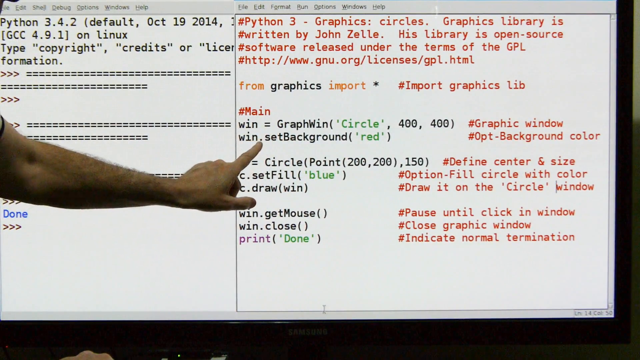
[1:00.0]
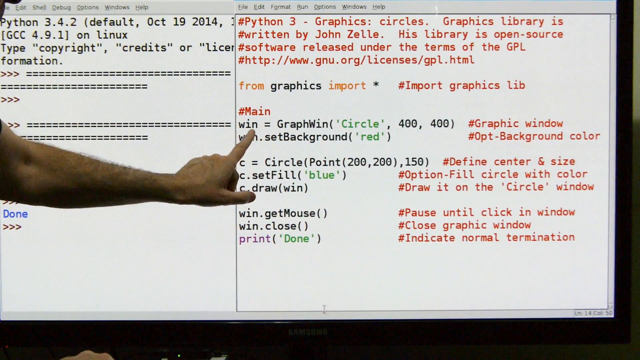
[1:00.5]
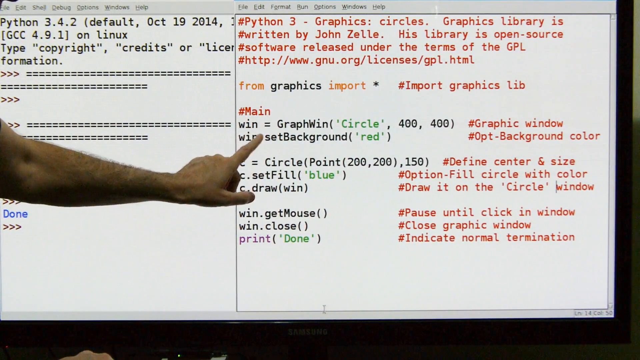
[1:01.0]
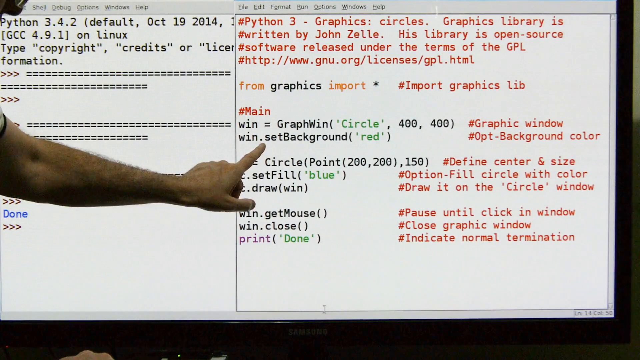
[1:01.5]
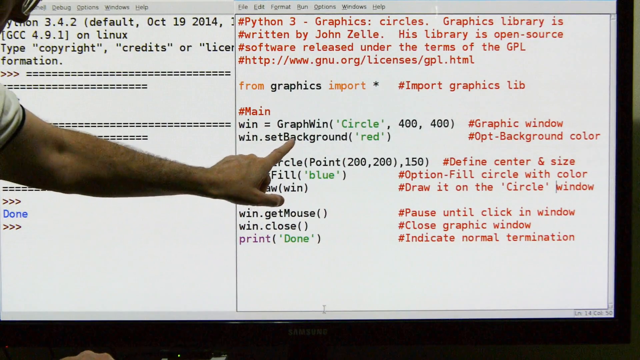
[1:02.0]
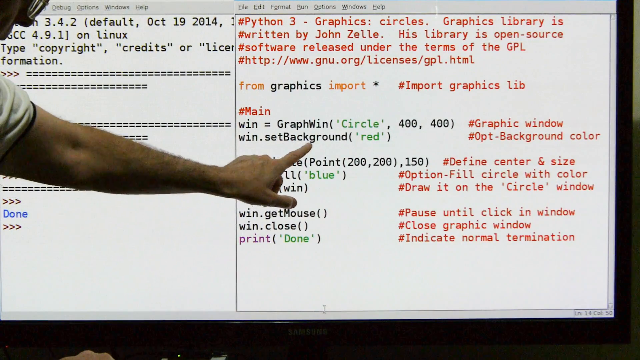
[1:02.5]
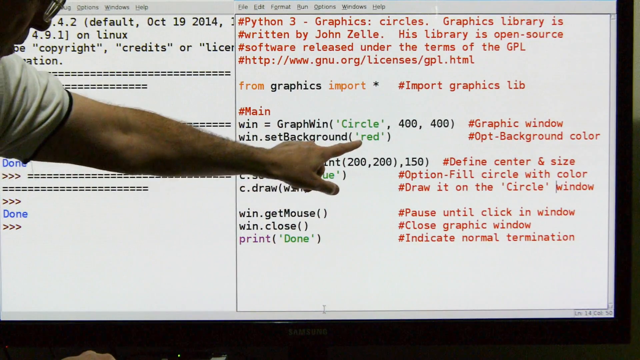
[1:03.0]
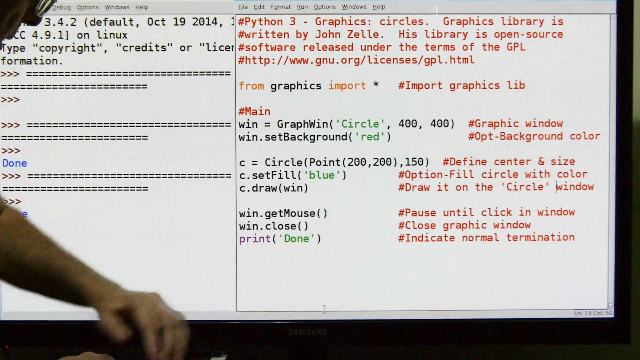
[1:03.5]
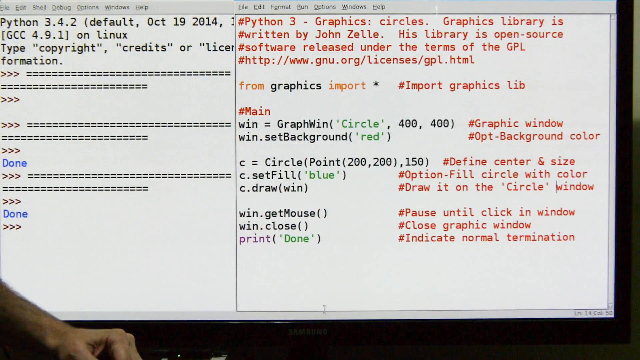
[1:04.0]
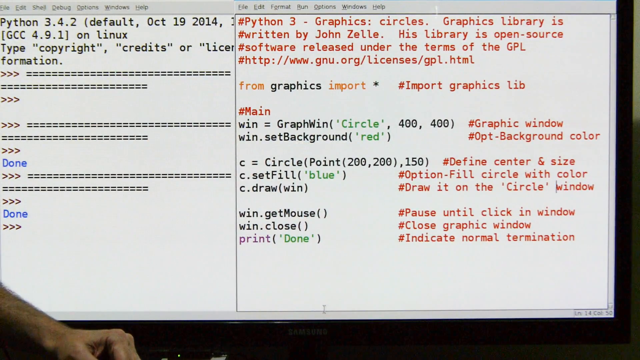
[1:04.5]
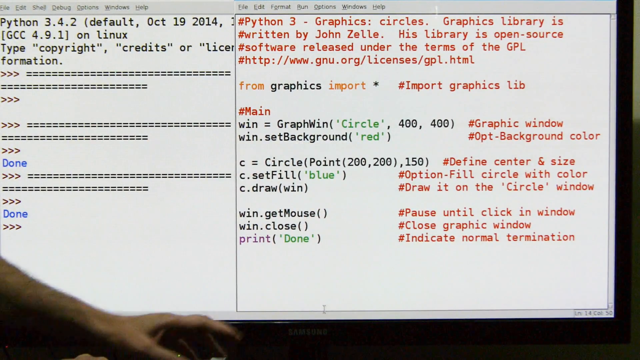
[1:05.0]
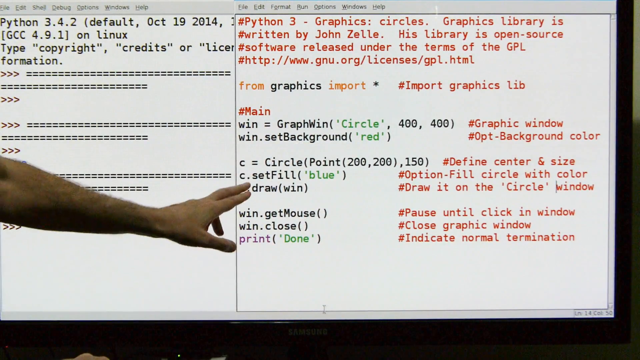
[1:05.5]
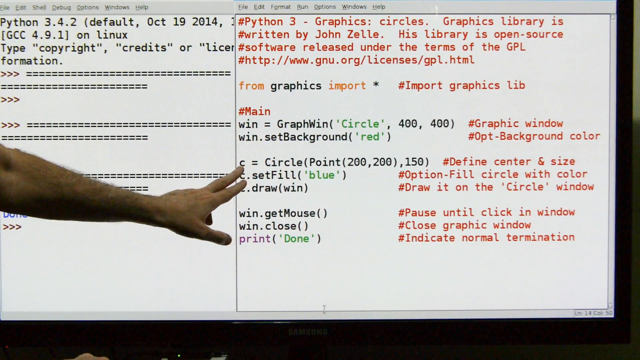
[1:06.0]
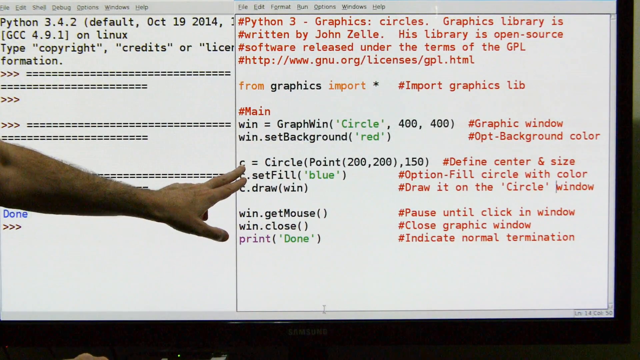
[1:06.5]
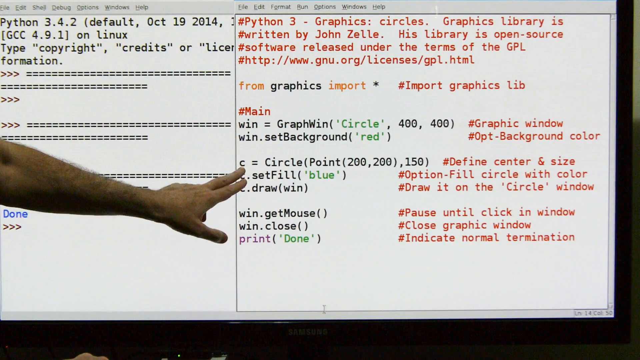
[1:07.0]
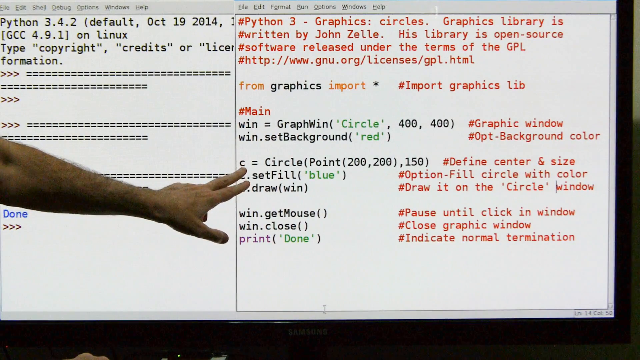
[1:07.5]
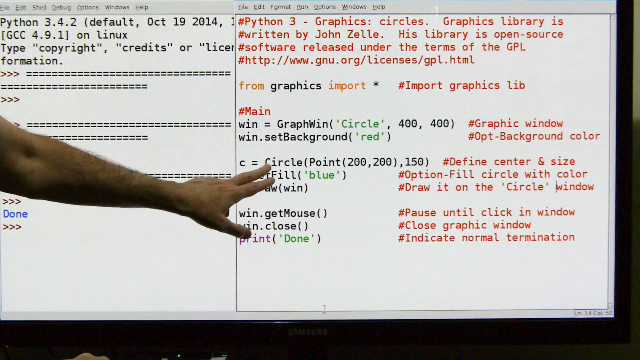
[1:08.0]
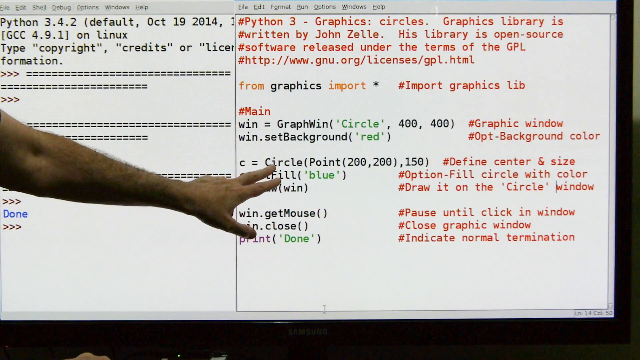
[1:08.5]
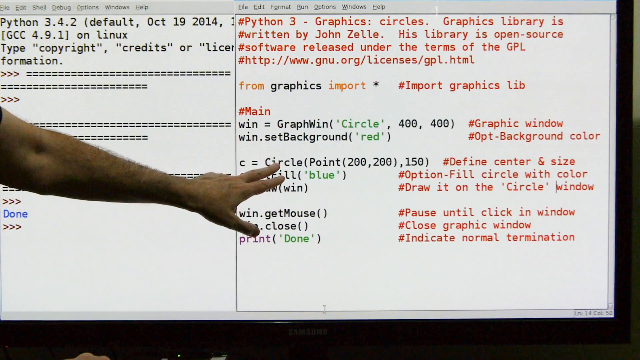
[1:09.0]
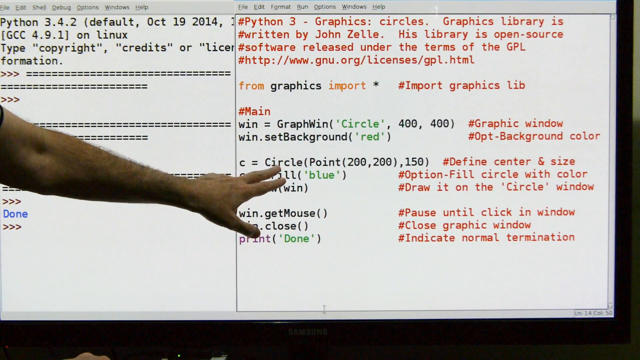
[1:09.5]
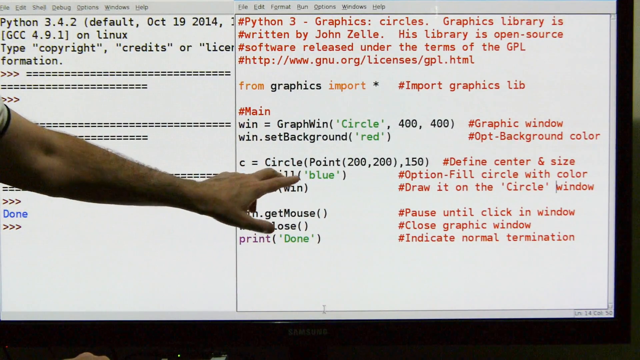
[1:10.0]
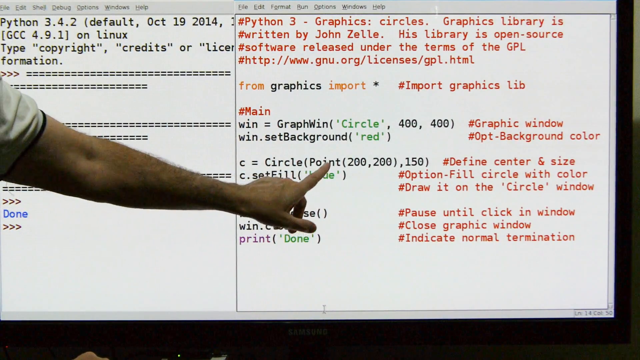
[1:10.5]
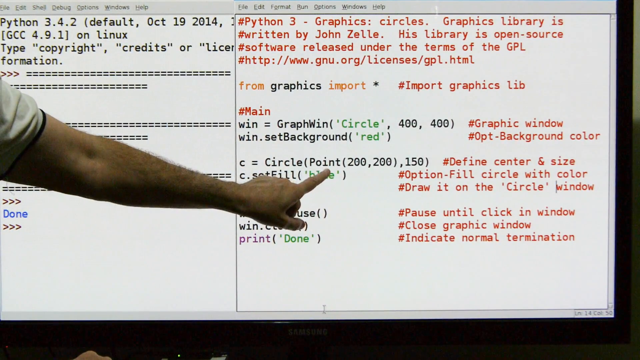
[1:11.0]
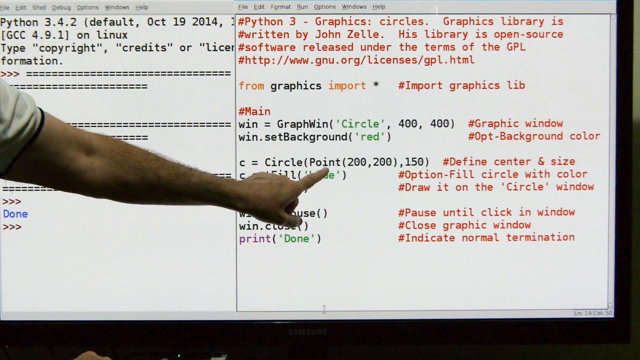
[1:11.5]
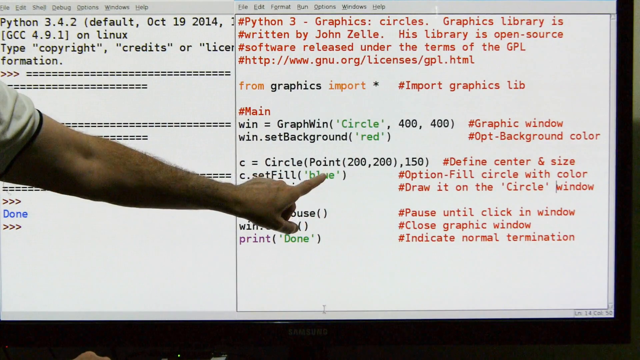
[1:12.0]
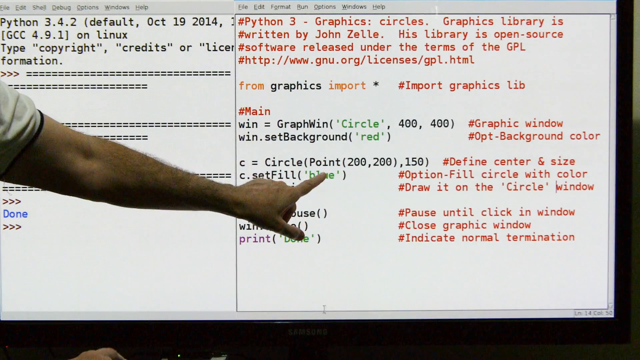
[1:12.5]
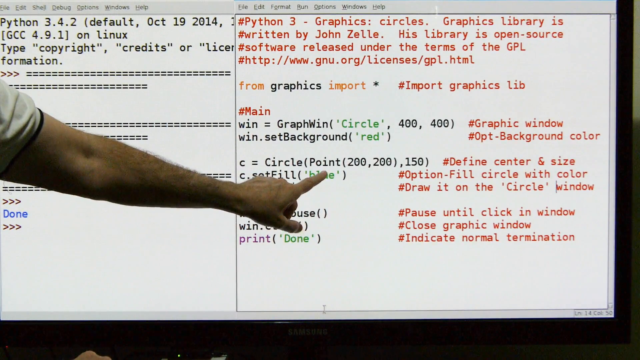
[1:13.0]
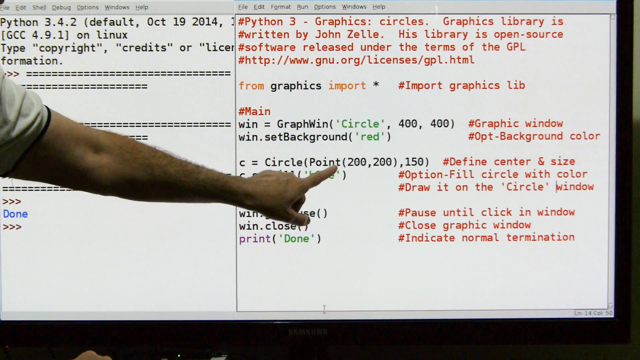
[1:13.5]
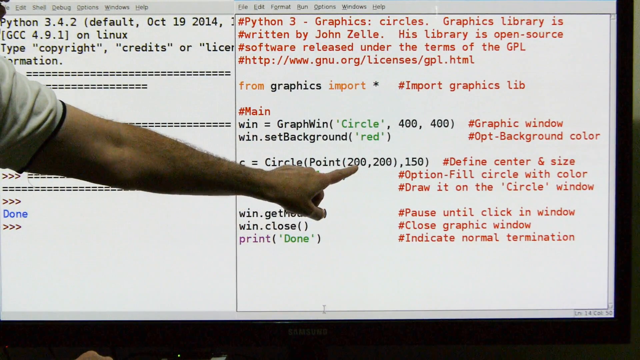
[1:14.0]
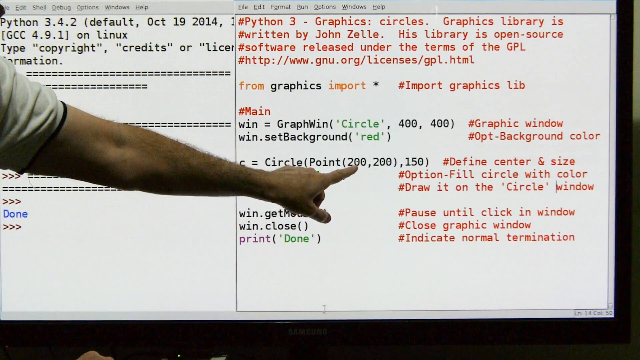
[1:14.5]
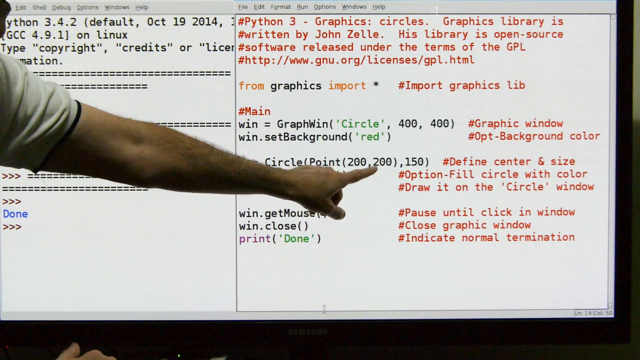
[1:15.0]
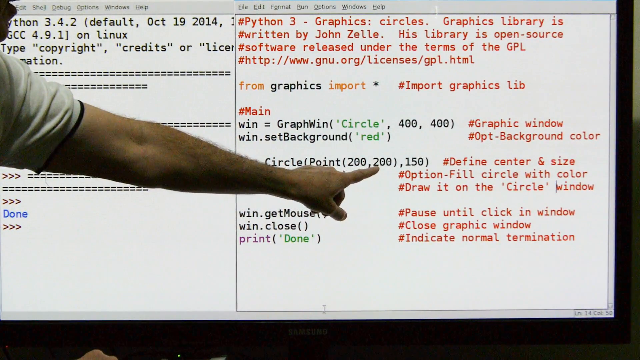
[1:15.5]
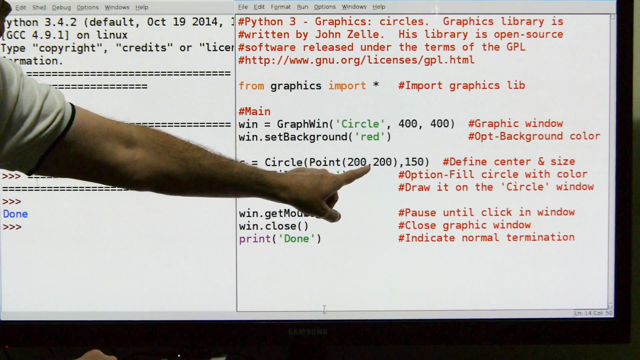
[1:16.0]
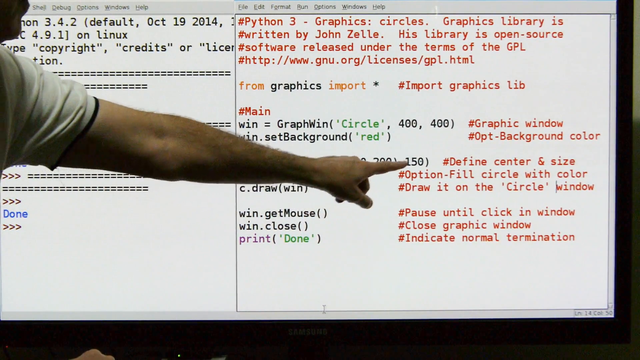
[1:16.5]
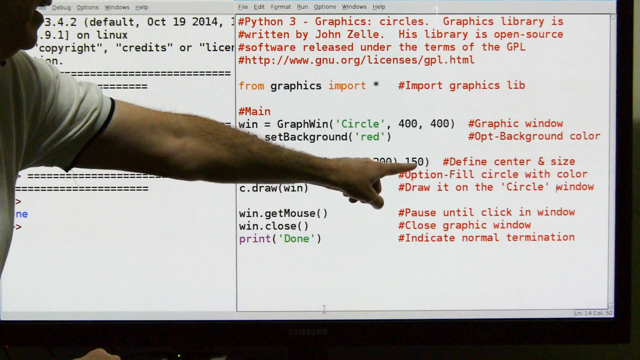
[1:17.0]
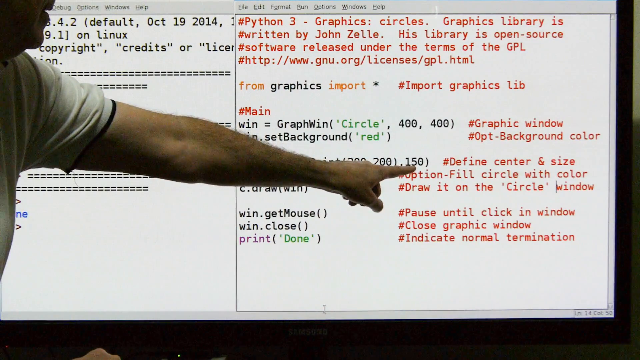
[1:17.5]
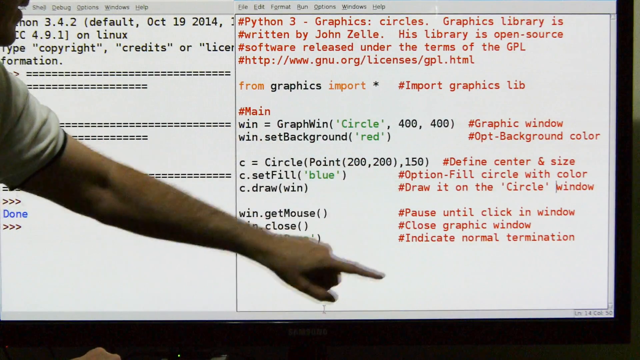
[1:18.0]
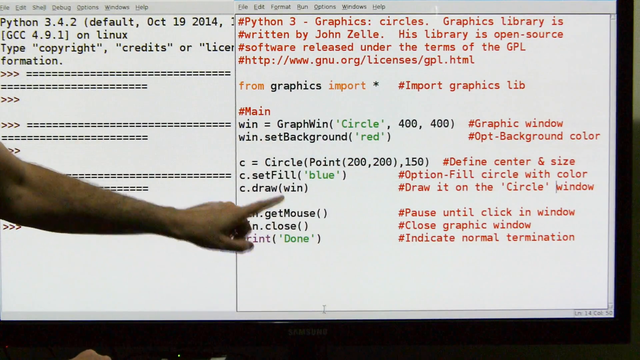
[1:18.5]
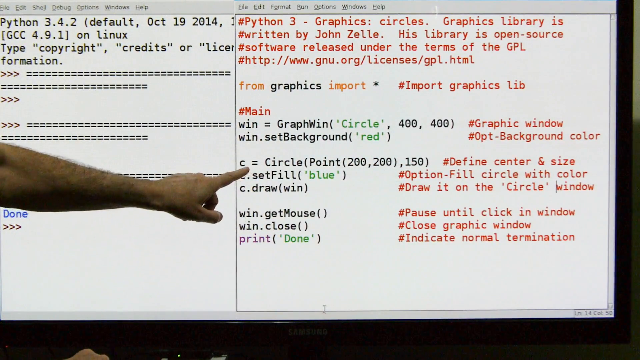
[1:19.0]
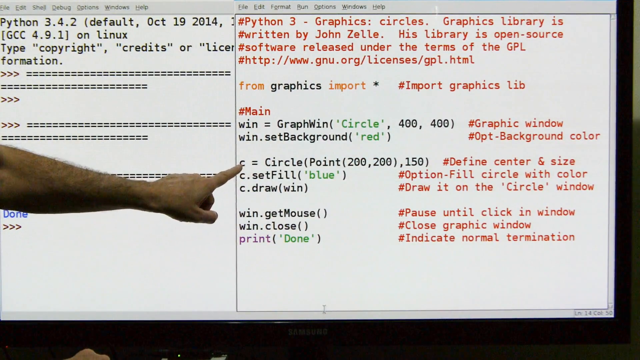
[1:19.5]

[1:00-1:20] The tutor continues with the Python graphics from John Seelye's library, which is open source. He points at the coordinates of the circle, using his pointer finger to point exactly at what he is reading. The graphics window is 400 by 400, and the background is set to red, with the text "optional background color." The instructor's face is shown briefly. The sleeve of his T-shirt is visible, a gray or whitish colour, with a black hem. He wears glasses, possibly reading glasses.